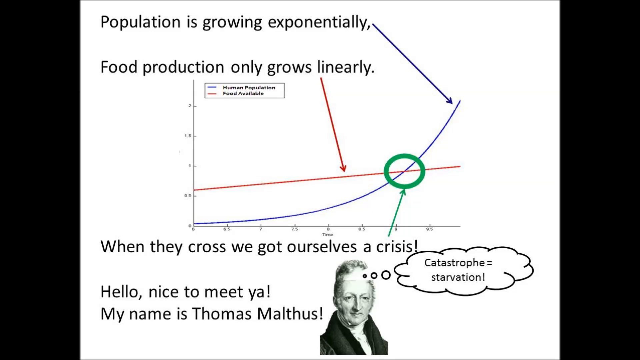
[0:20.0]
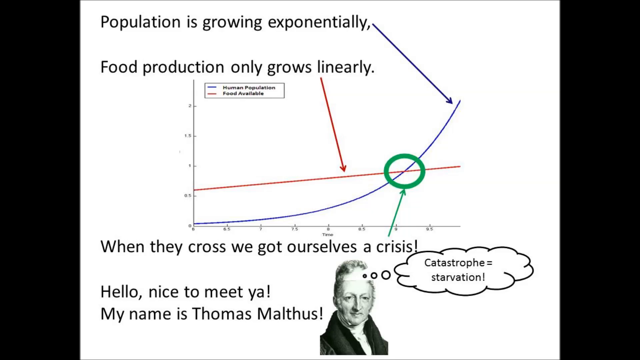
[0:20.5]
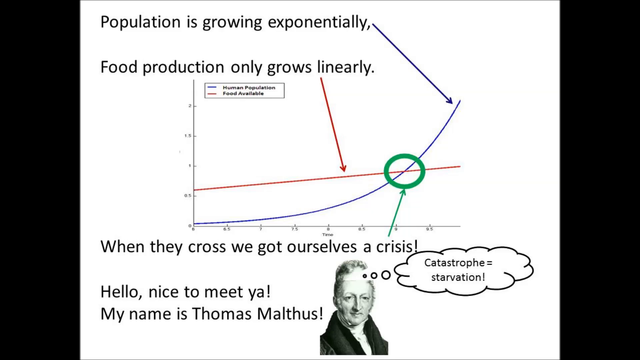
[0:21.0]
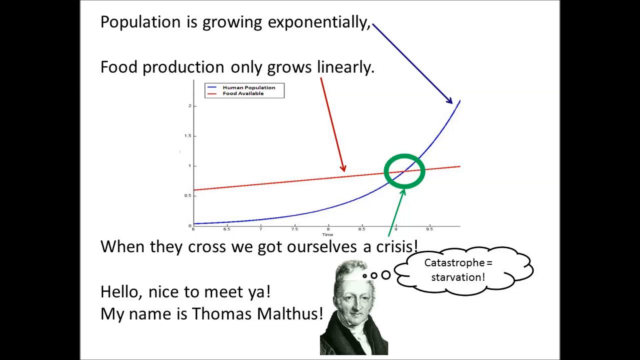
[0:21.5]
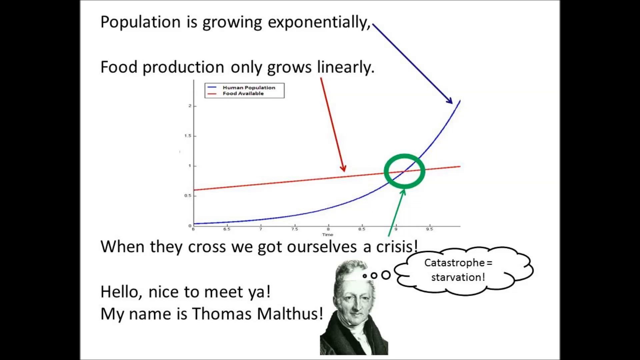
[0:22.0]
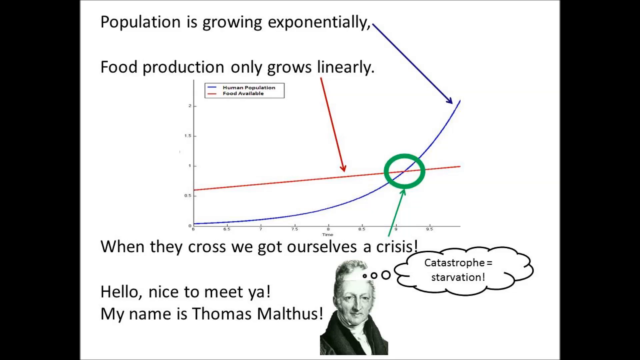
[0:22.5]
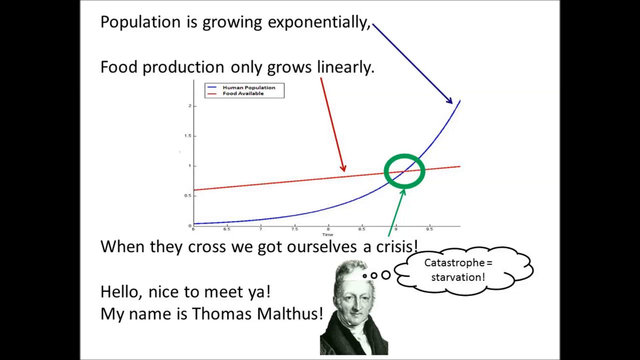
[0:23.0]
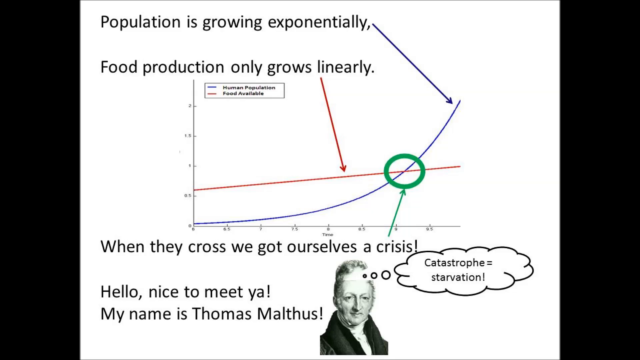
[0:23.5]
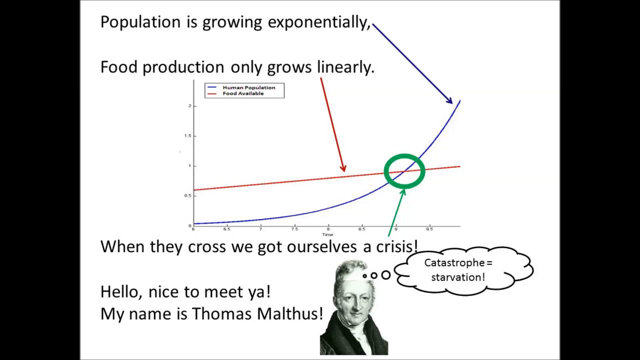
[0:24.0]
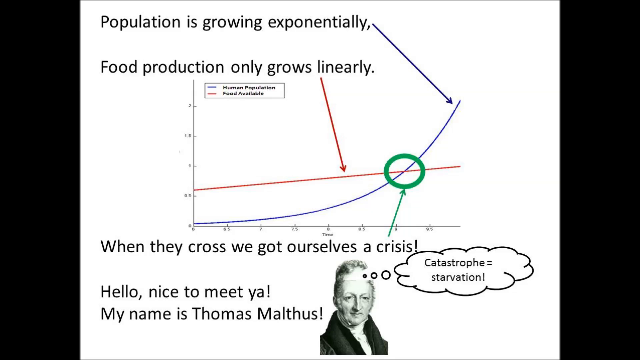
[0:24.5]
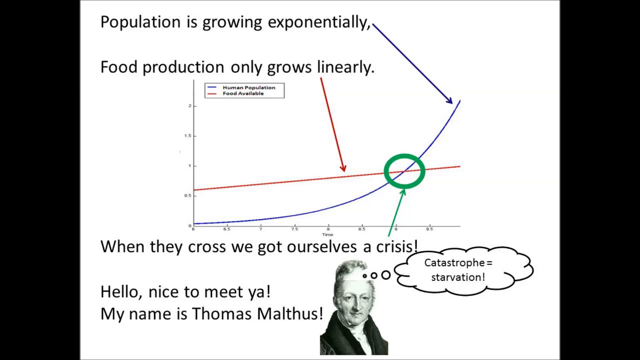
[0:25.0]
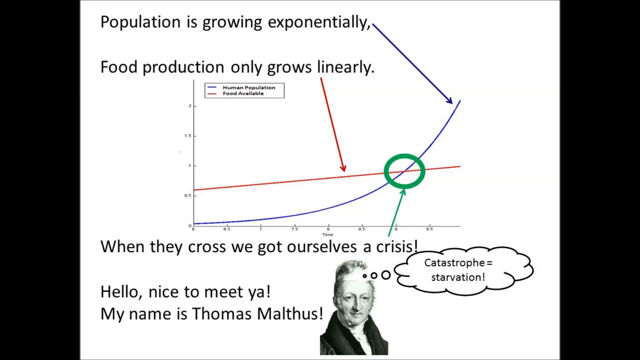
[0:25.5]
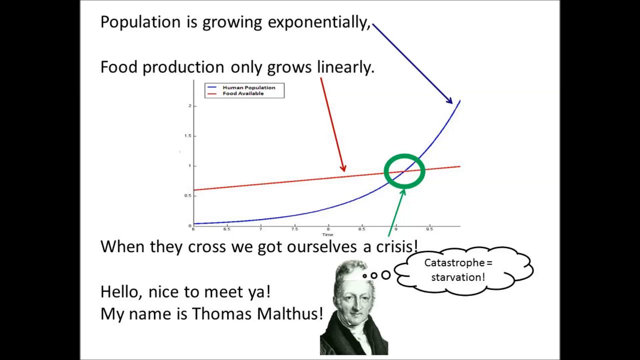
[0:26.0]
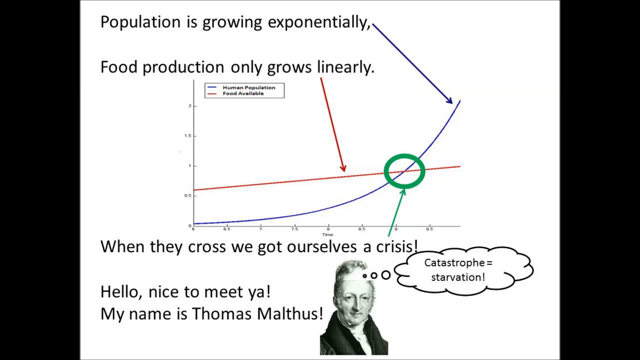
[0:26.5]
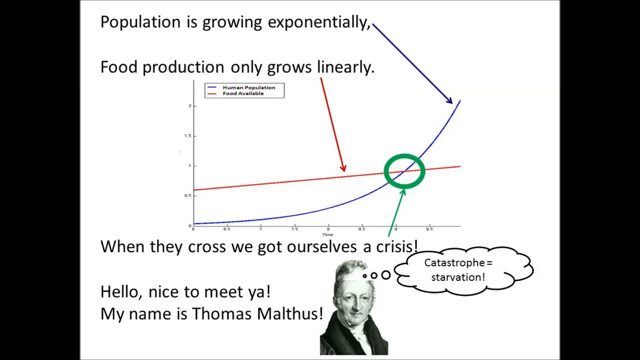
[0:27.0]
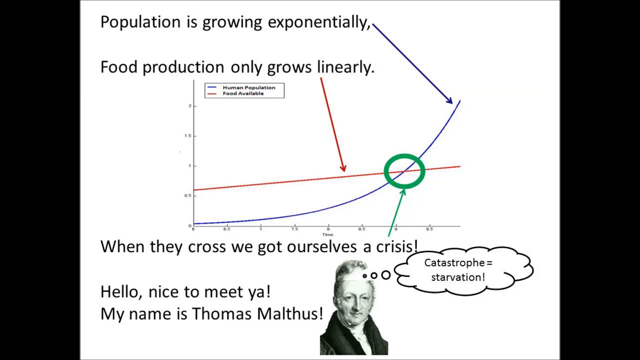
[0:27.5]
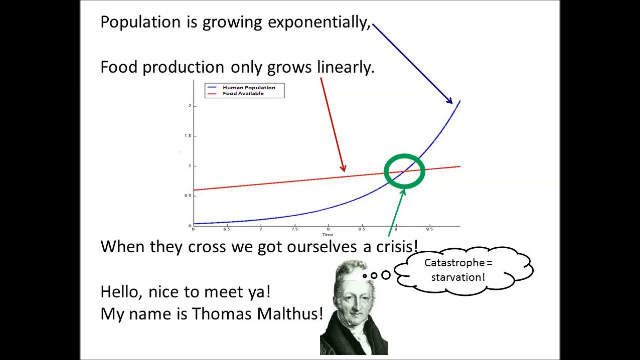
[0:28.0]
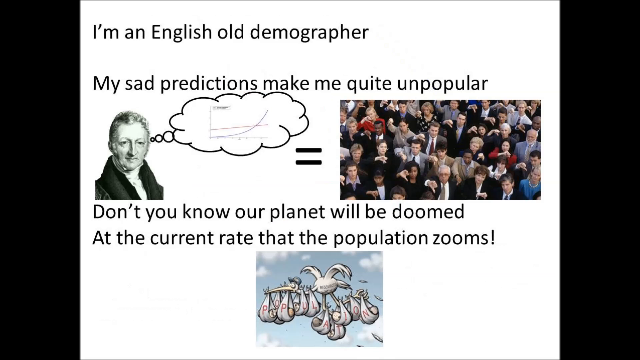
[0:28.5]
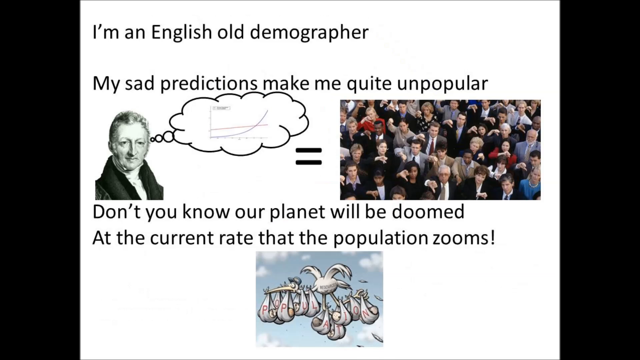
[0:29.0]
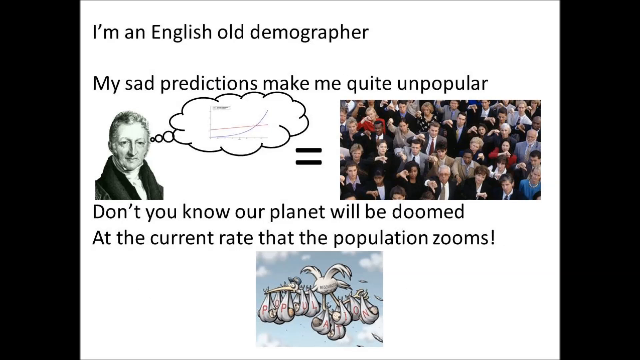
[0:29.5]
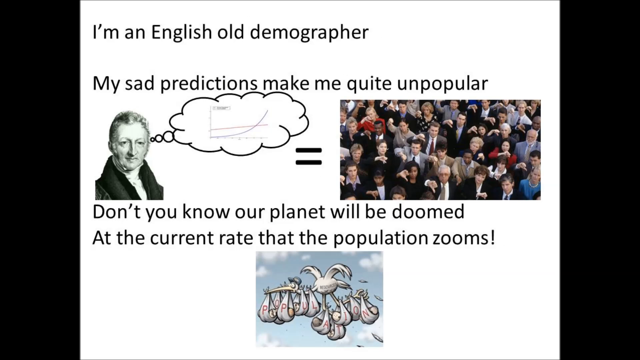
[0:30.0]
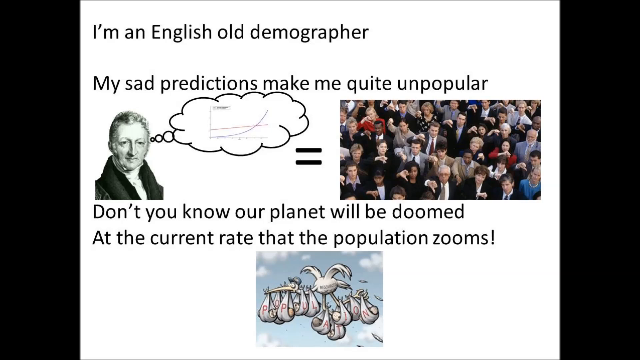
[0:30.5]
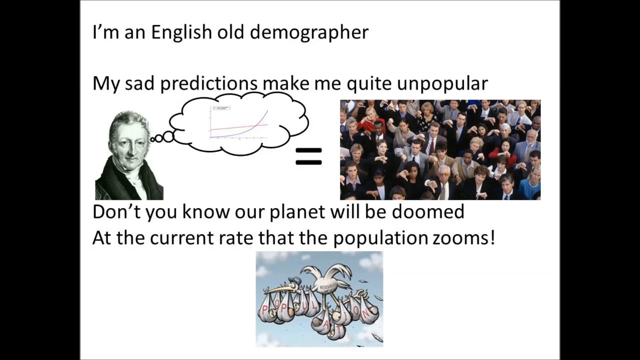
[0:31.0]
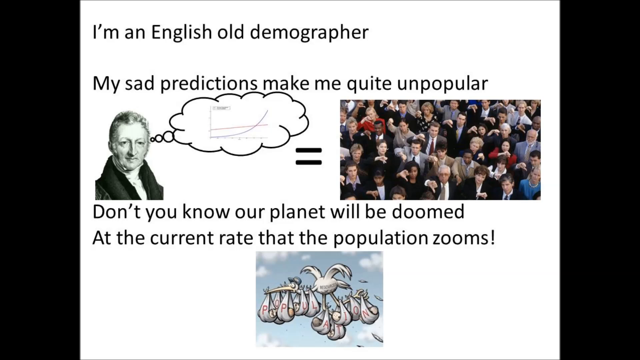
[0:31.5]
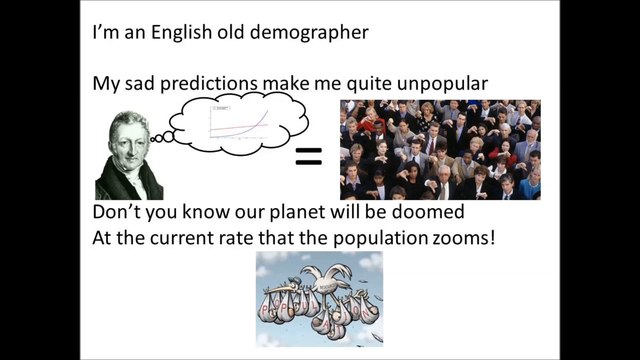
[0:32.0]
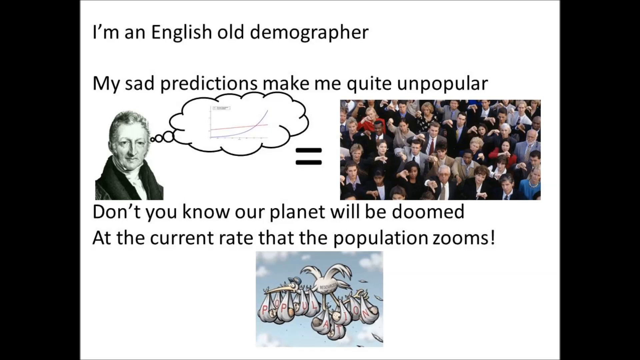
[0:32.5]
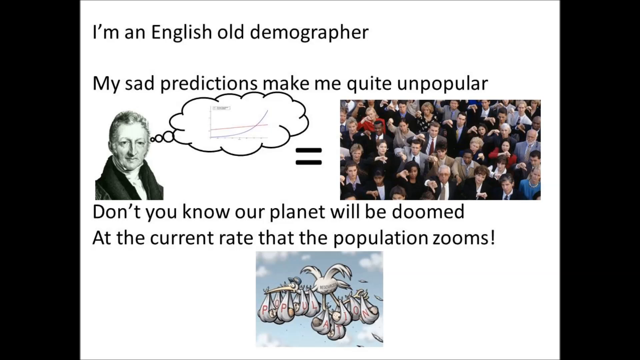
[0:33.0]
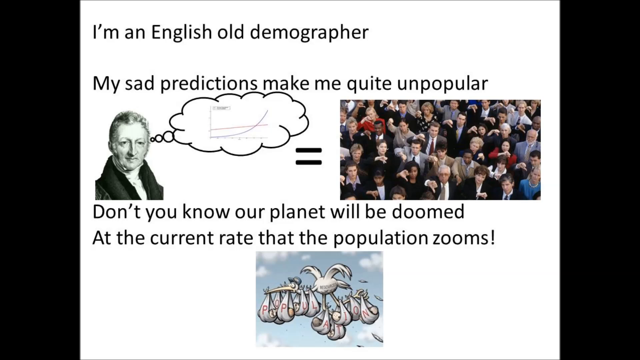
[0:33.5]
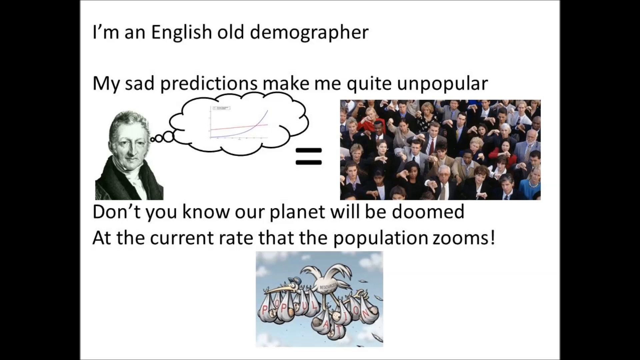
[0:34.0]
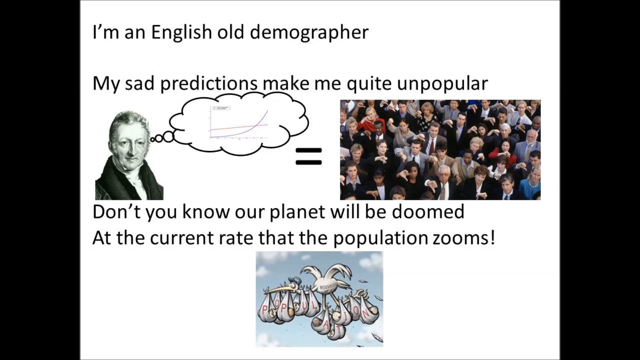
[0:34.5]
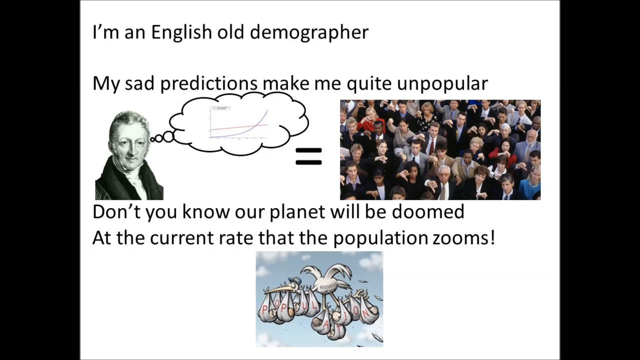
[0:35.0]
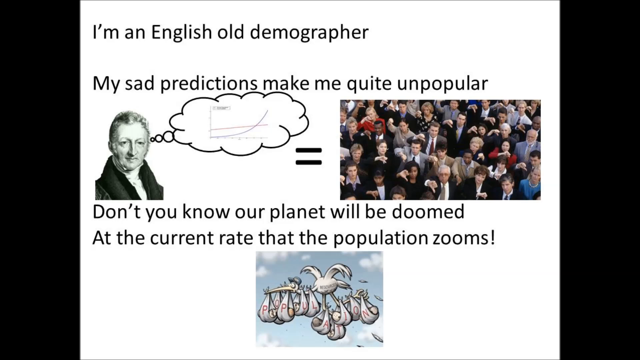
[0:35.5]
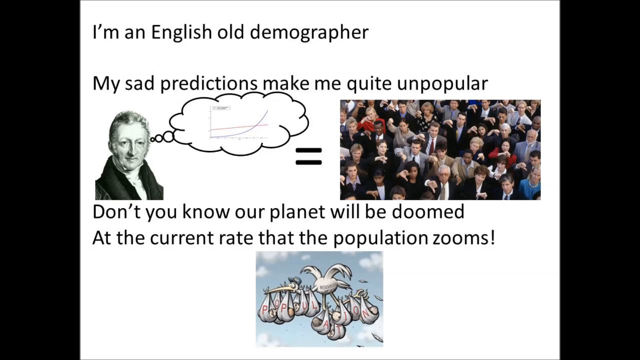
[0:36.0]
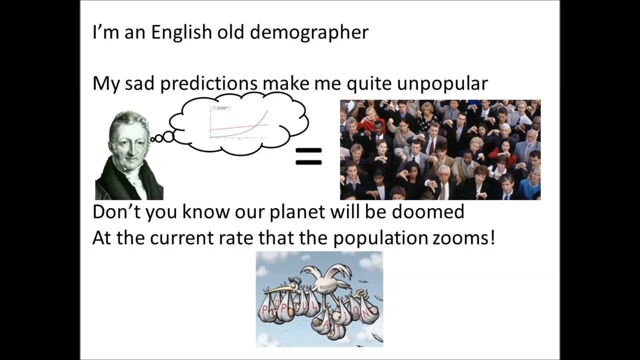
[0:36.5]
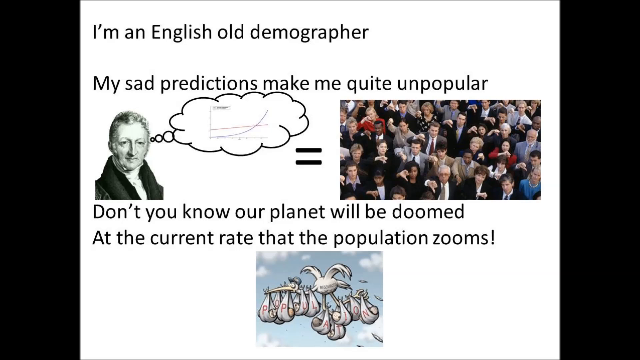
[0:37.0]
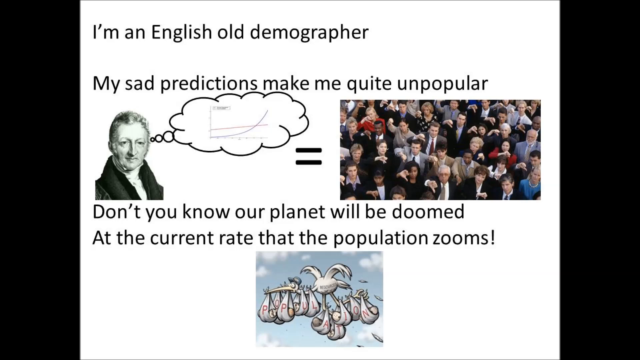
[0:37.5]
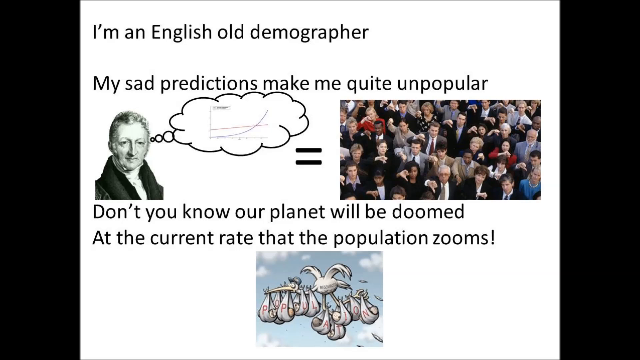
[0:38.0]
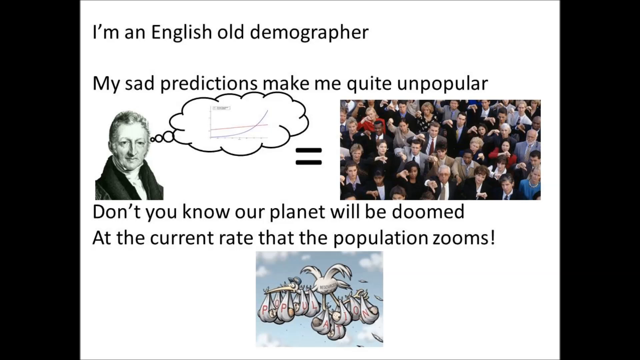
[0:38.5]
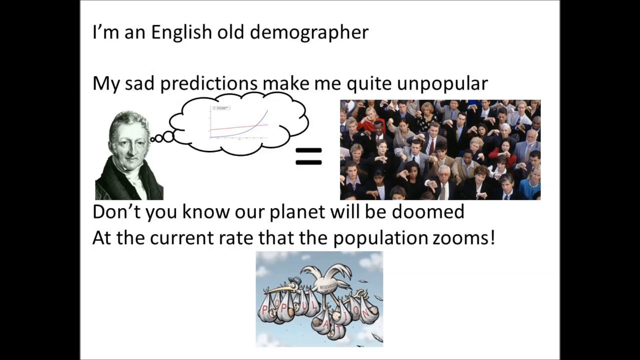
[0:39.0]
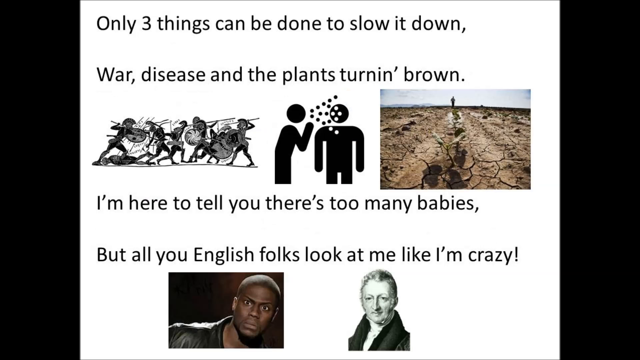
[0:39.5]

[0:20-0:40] The white pop-up screen is in the background, and in the middle of the foreground is a graph in a slightly diagonal position. The text "the population is growing exponentially" is shown by a curved blue line on the graph. Underneath is the text "food production only grows linearly," with a red line pointing to a red line on the graph. Text under the graph indicates that when the lines on the graph cross, there will be a crisis. An image of Thomas Malthus is at the bottom of the screen, and the bubble above his head shows catastrophe equals starvation. The scene changes to a different screen with the text "I'm an English old demographer" at the top. The scene changes again to the text "only three things can be done to slow it down."